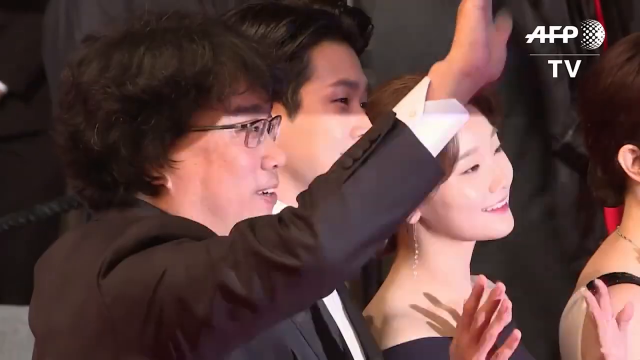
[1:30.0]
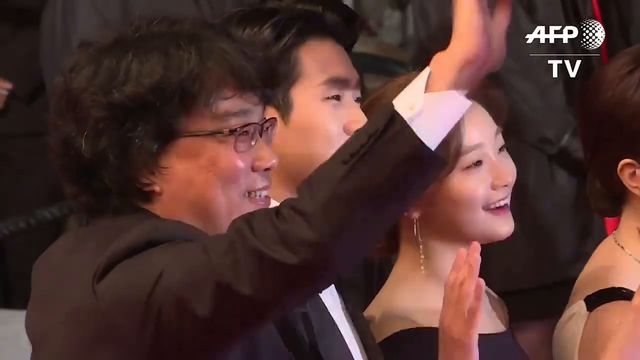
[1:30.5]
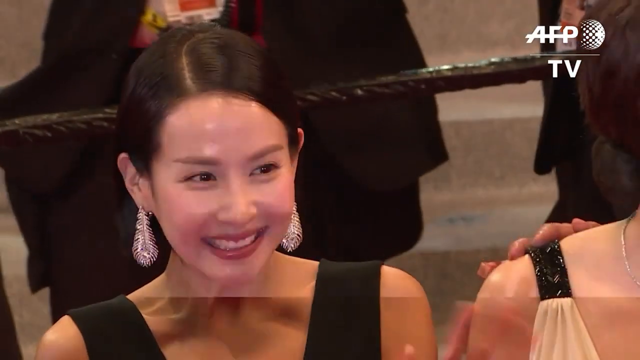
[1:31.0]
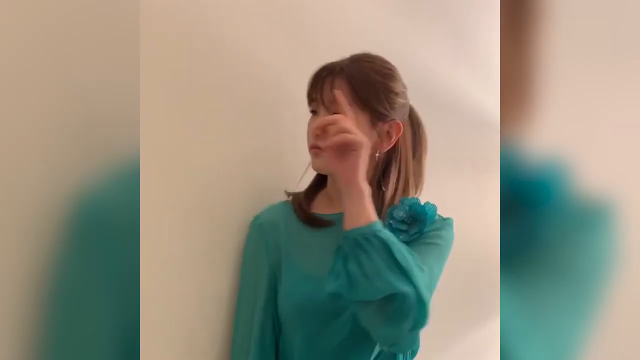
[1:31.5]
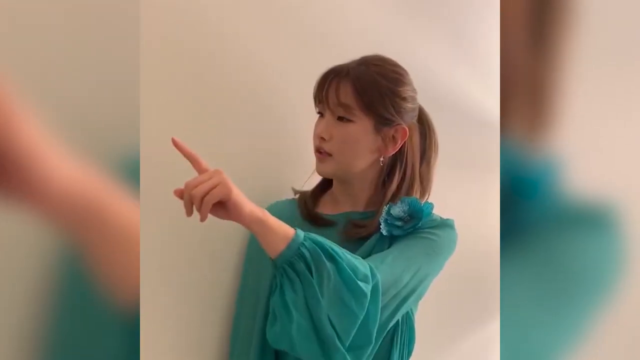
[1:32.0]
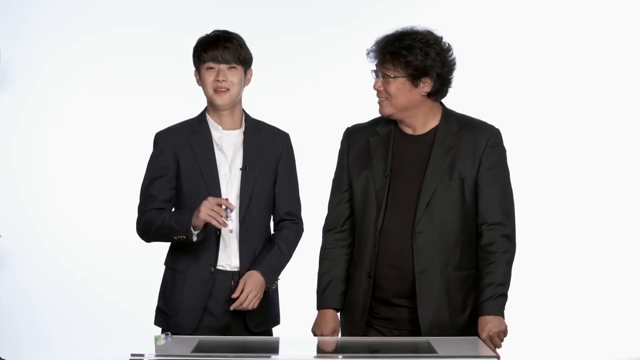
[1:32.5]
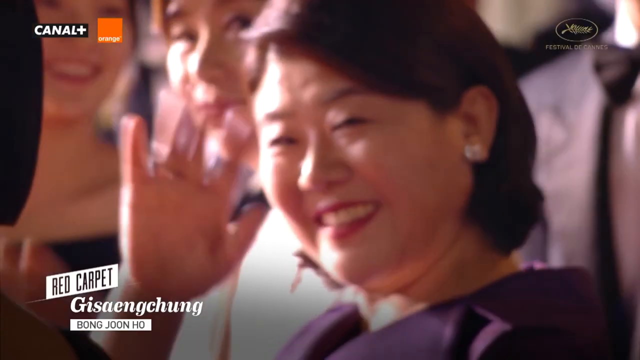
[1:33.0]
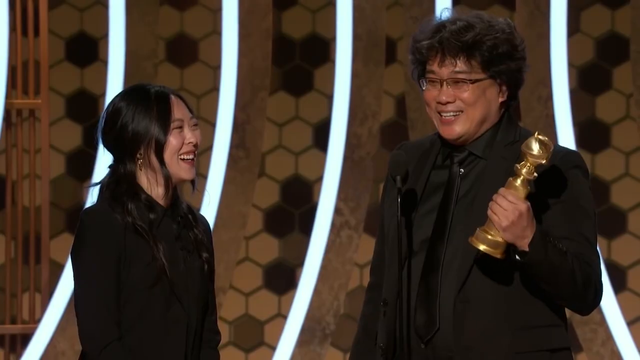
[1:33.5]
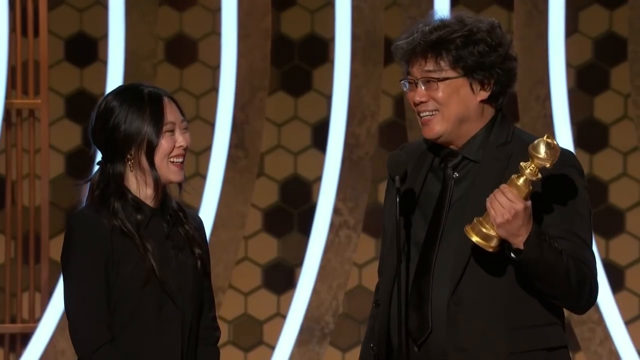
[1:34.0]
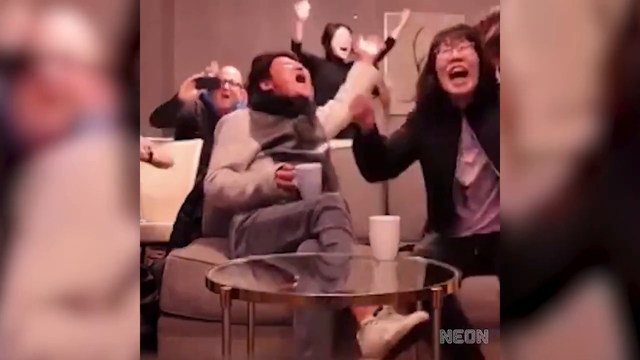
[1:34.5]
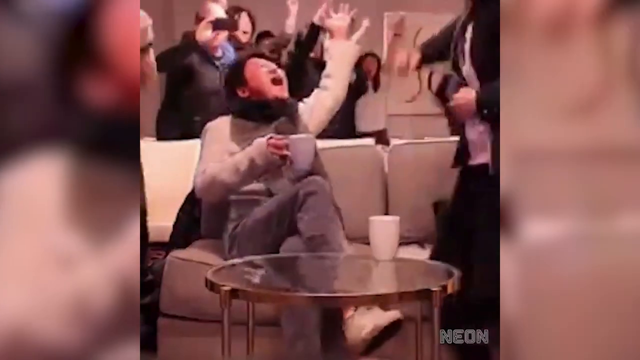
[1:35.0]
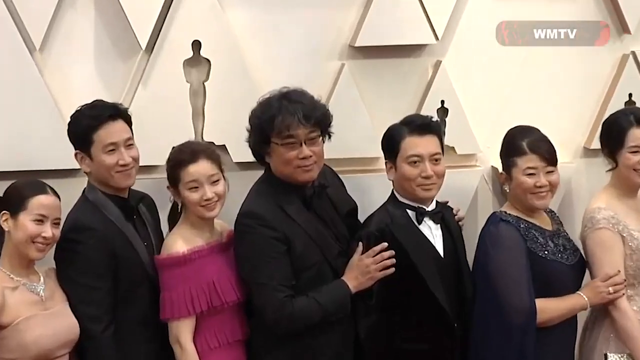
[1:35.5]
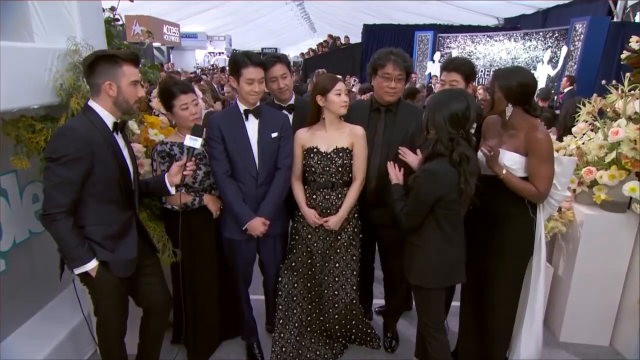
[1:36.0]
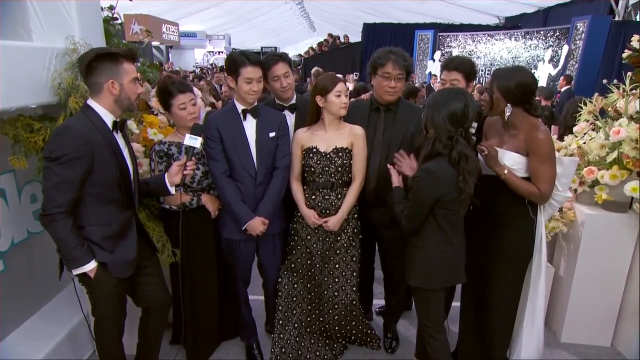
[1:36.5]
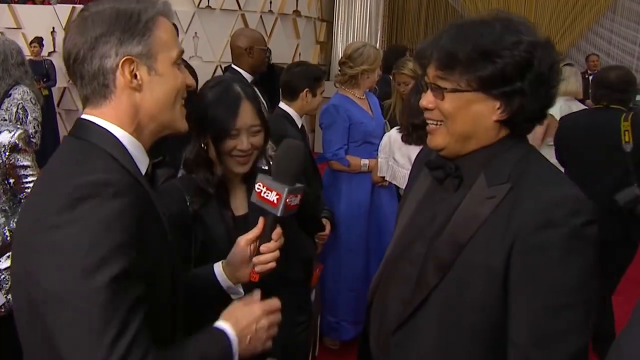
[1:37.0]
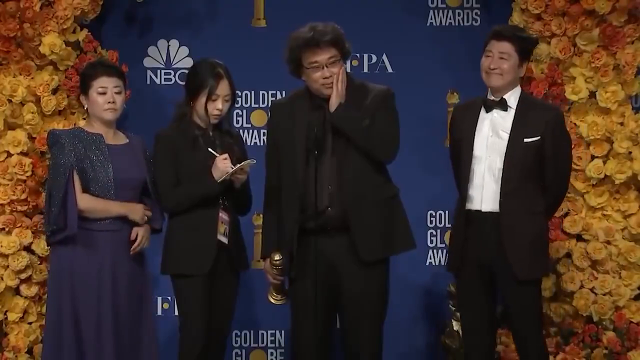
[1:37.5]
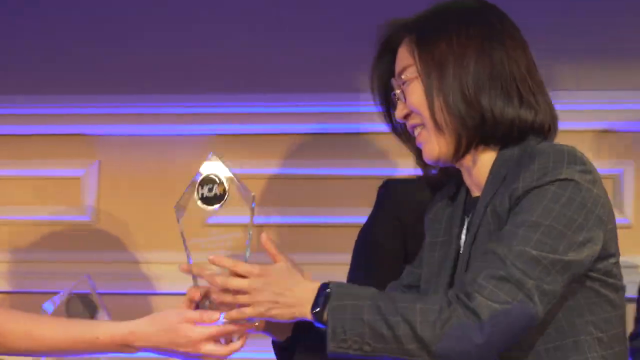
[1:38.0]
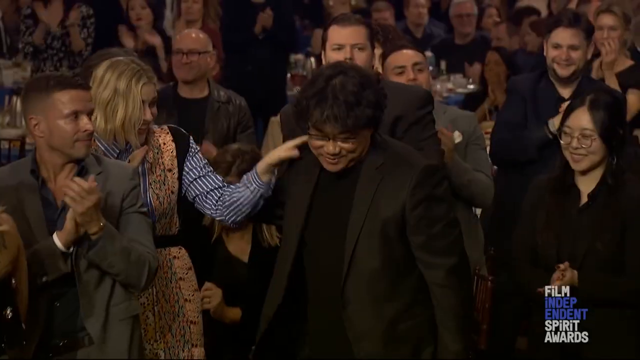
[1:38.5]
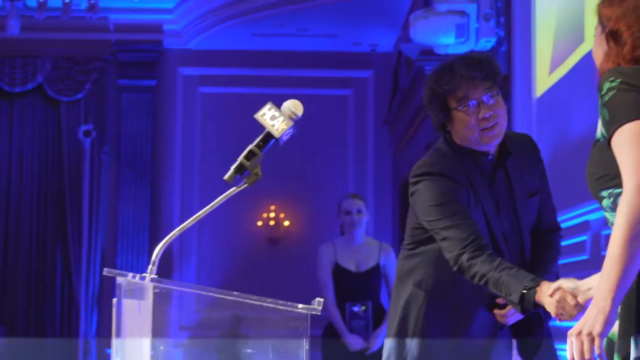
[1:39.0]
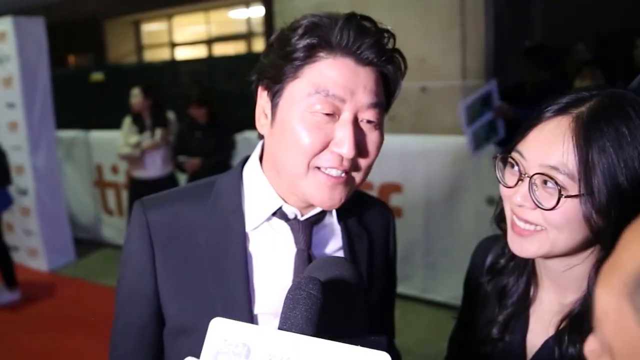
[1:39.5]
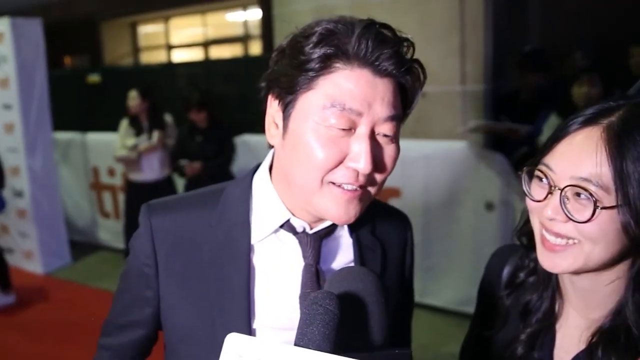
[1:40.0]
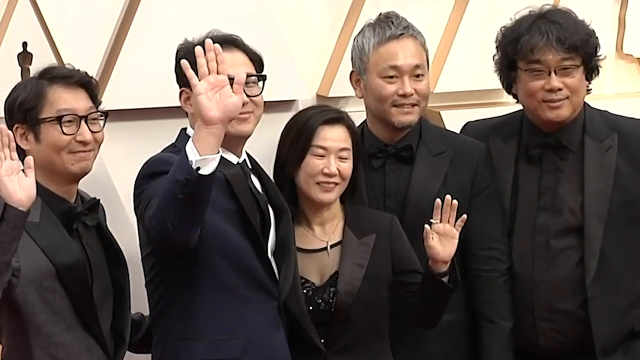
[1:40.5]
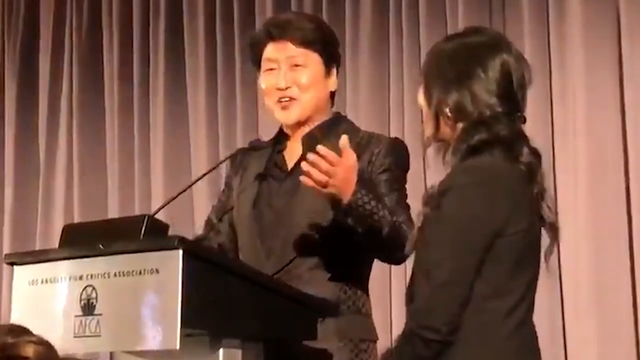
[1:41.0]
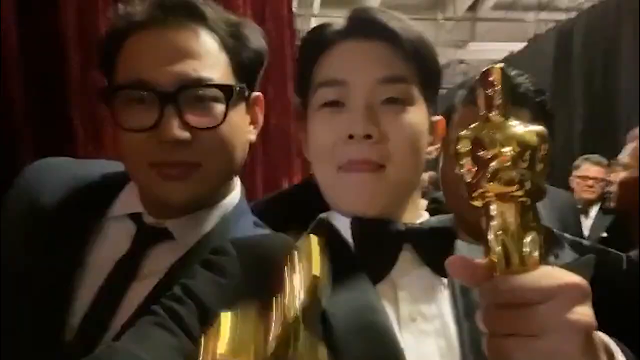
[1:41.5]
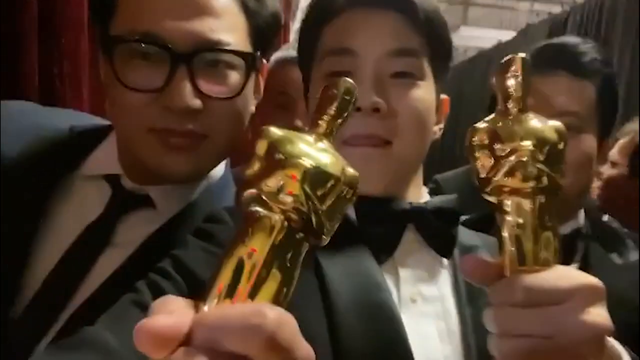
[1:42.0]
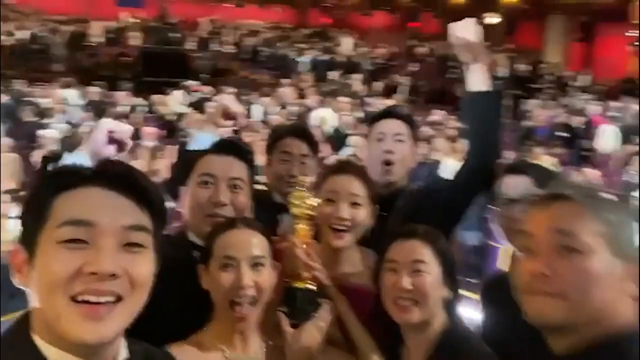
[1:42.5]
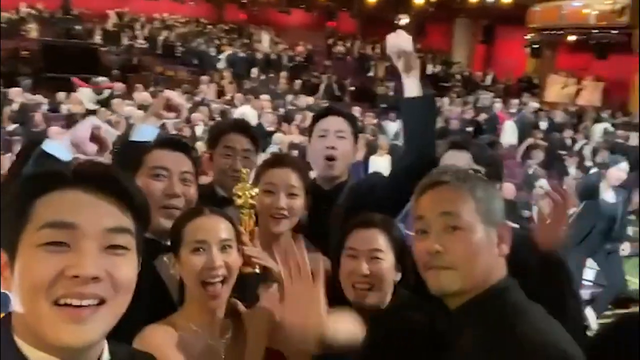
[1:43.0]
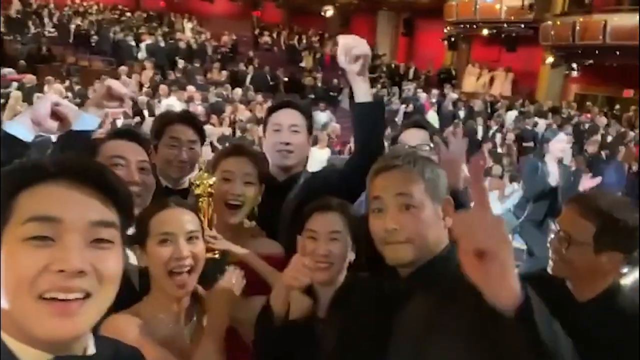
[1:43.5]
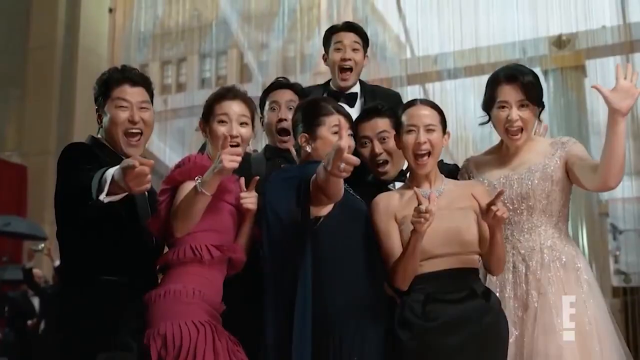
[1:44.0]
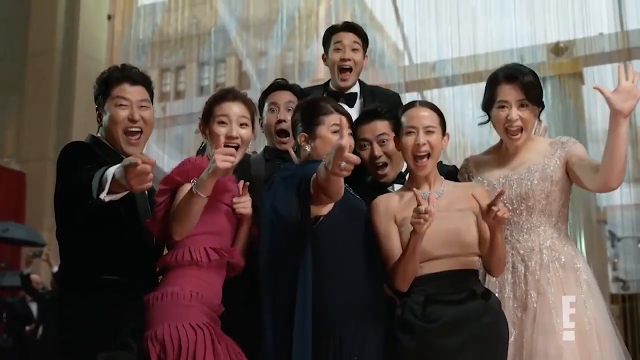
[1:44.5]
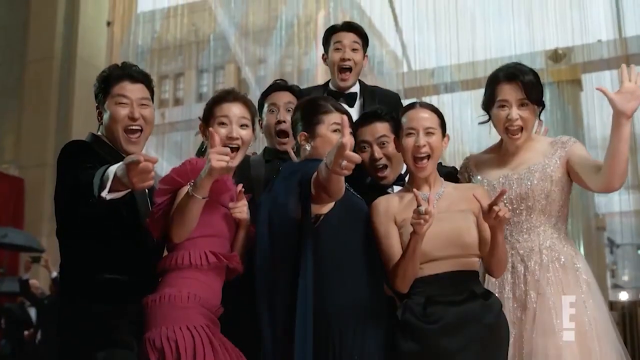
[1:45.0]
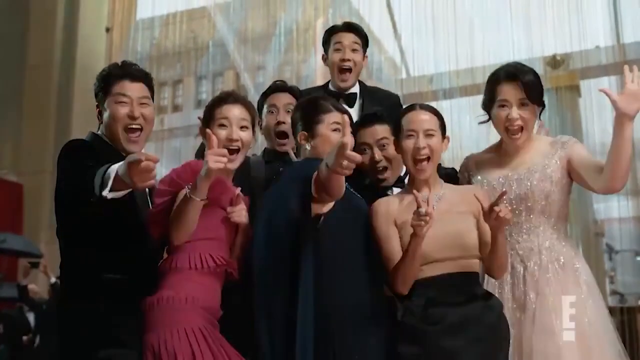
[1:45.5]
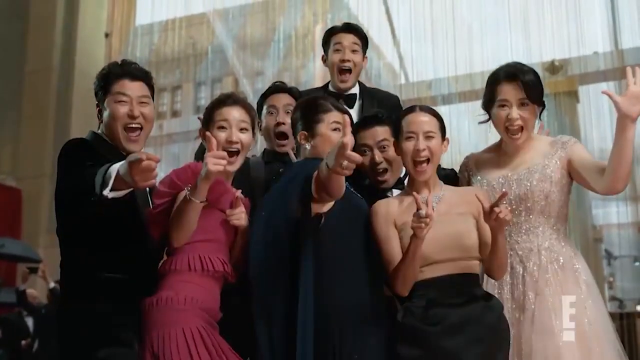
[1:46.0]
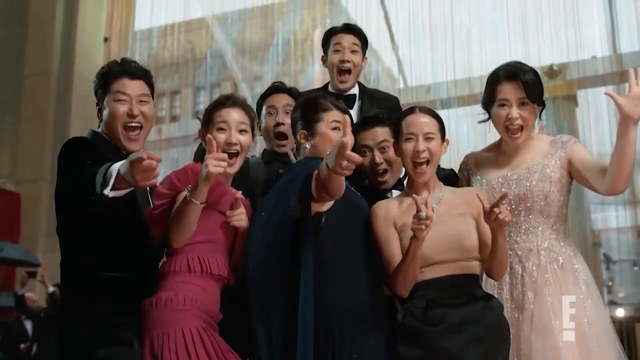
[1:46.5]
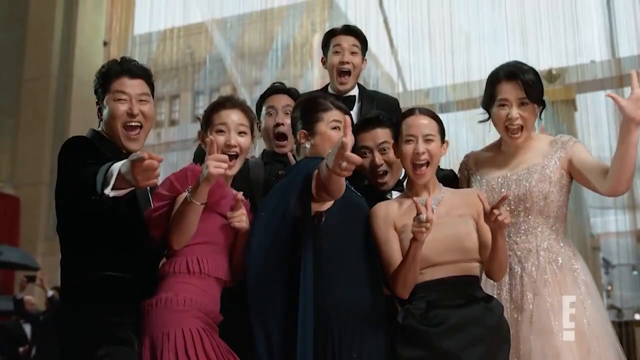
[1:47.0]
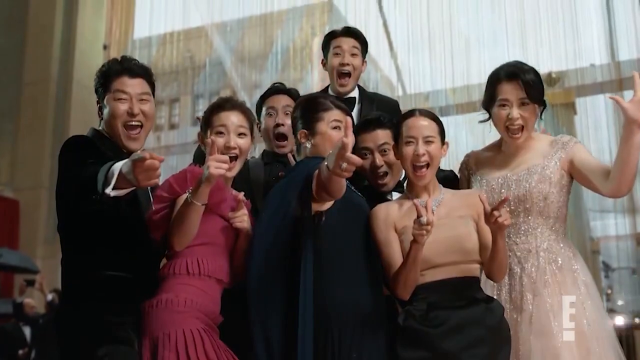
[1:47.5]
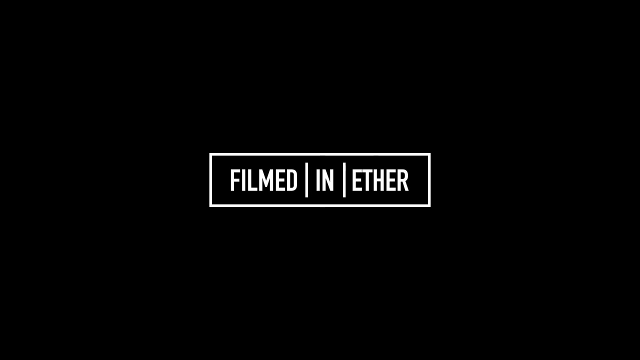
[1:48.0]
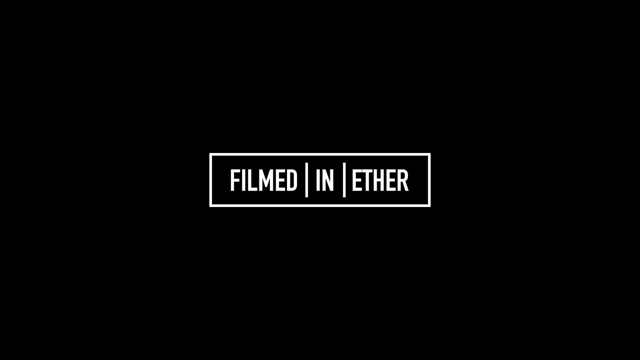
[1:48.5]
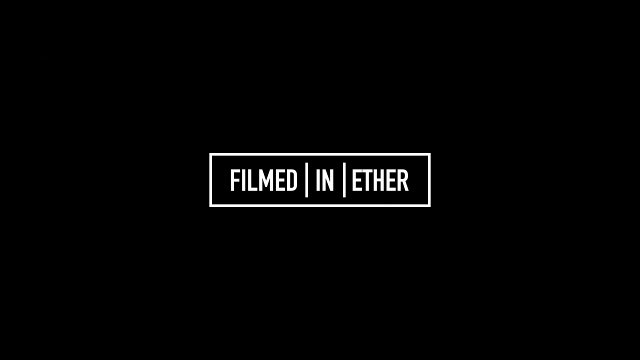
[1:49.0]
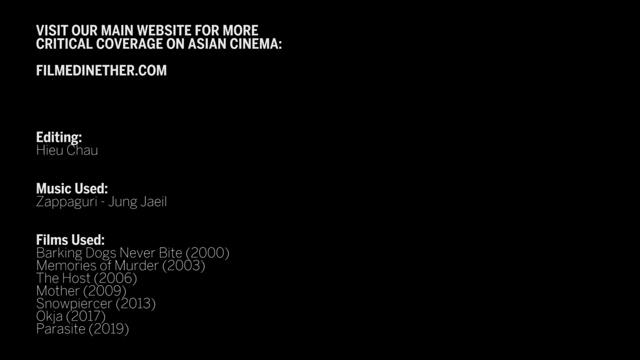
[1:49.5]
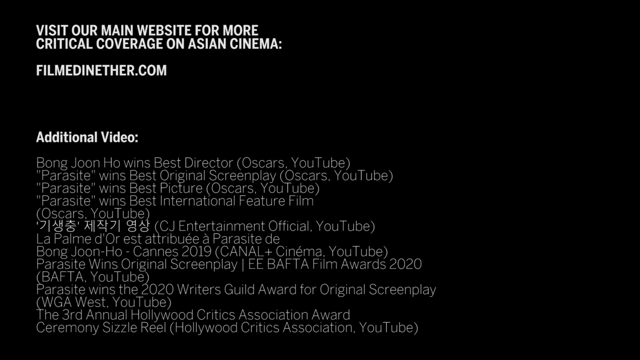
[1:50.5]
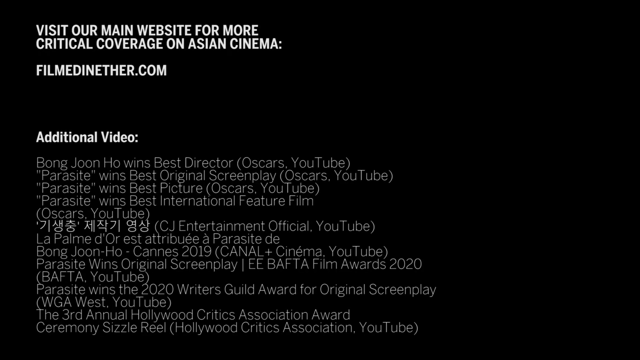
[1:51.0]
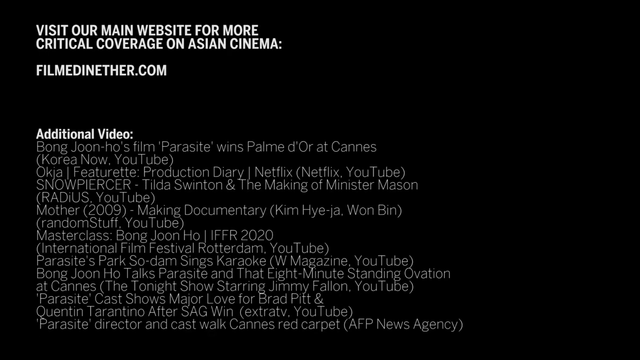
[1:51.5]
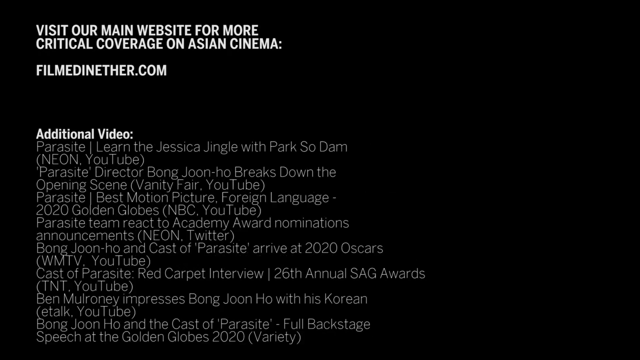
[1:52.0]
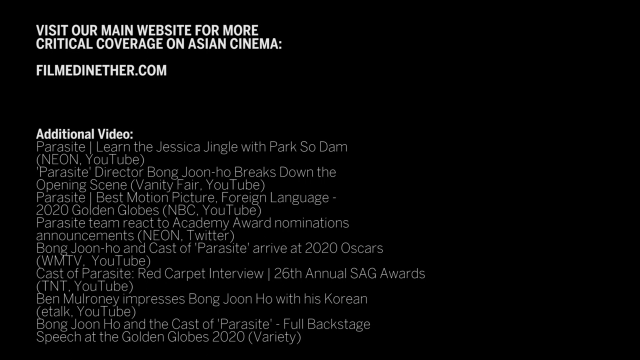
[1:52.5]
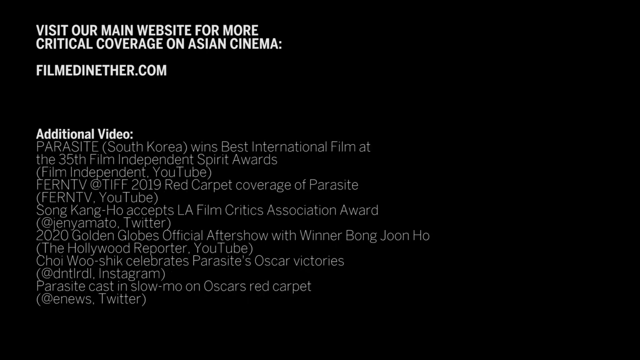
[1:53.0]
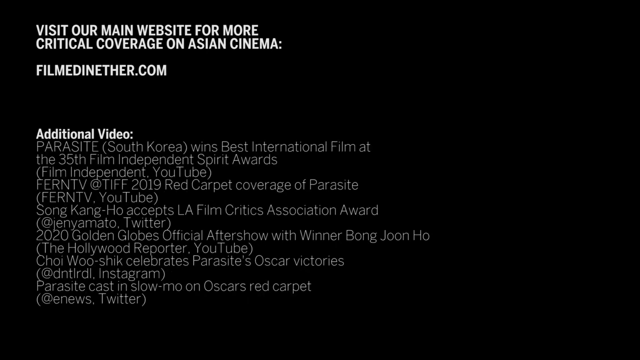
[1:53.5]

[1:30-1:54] People seem to be cheering, a lot of them, possibly because they have won awards. Many celebrities are featured, some in the background, and most of them seem to be Asian. Some of them hold awards in their hands, and many people cheer. As the video ends, closing credits appear in white on a black background.